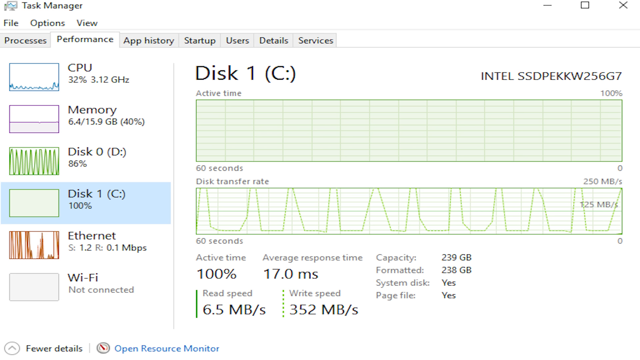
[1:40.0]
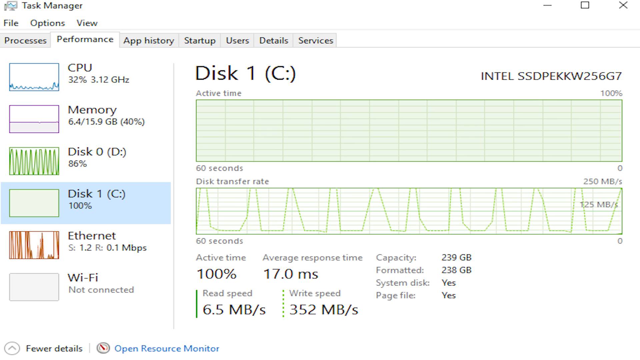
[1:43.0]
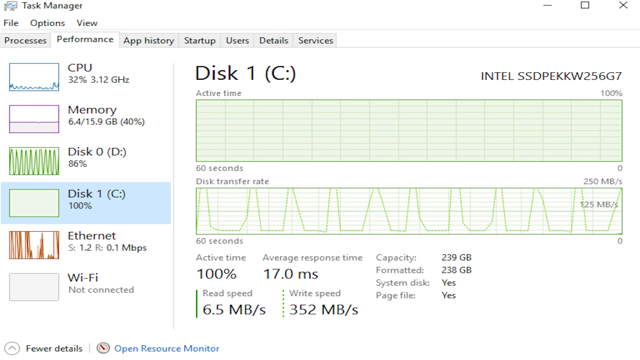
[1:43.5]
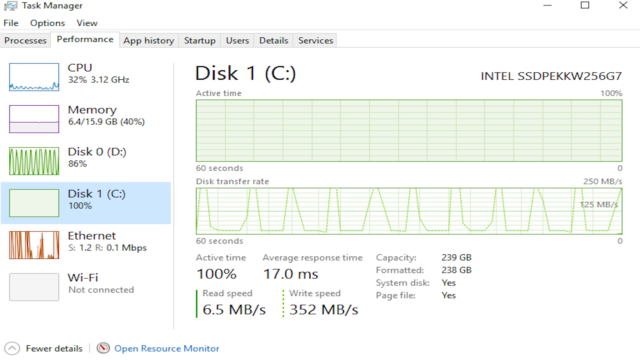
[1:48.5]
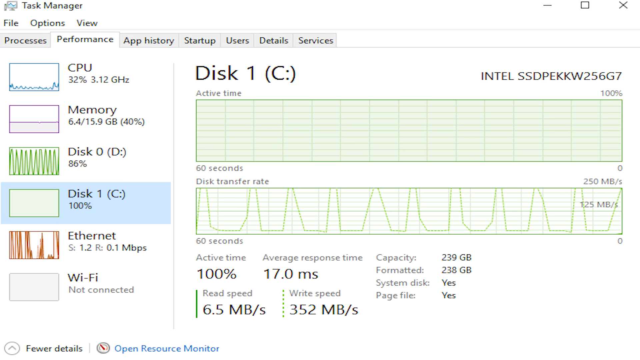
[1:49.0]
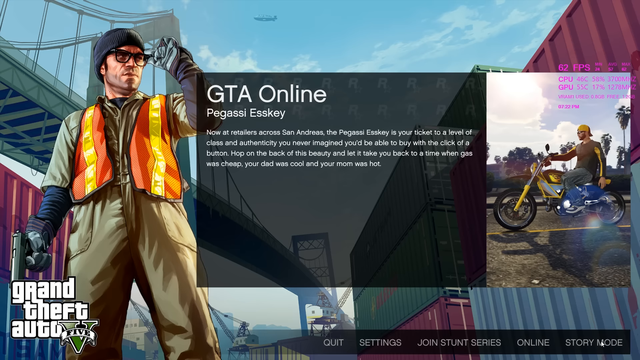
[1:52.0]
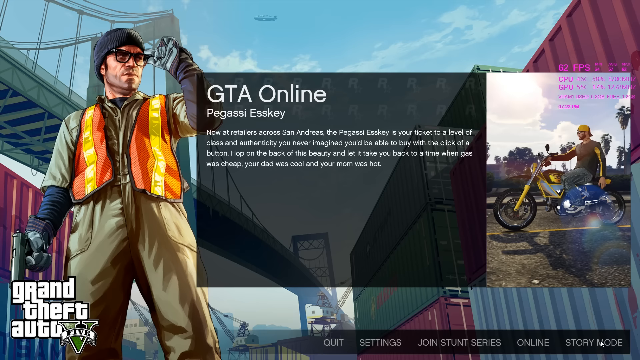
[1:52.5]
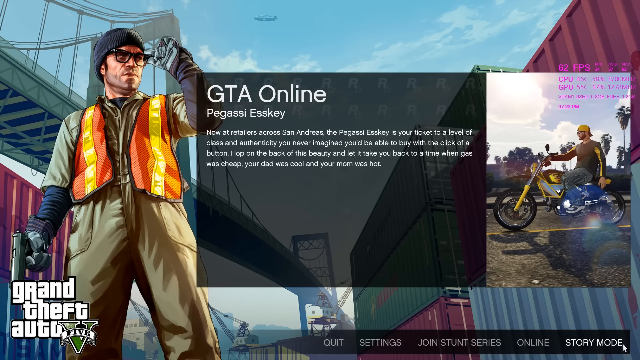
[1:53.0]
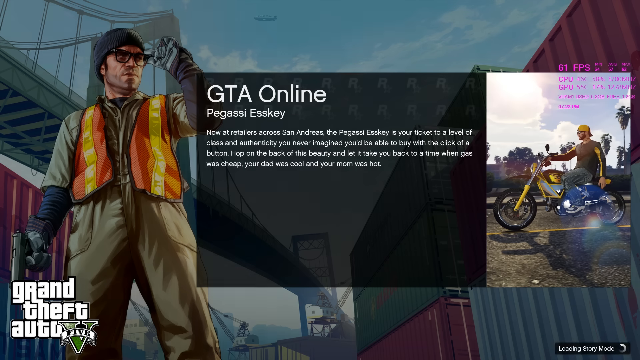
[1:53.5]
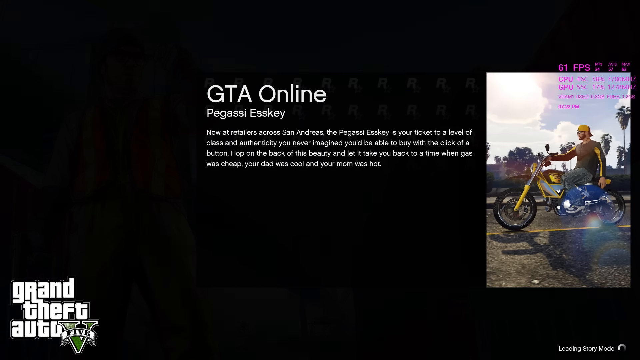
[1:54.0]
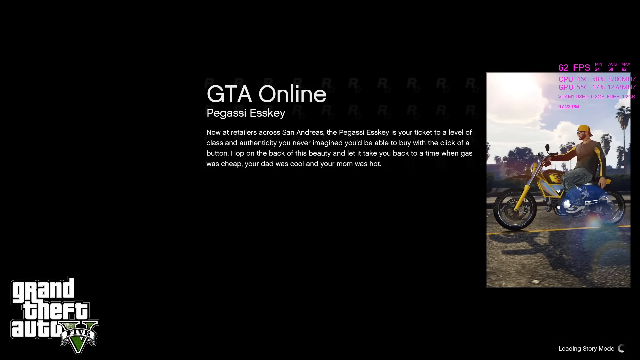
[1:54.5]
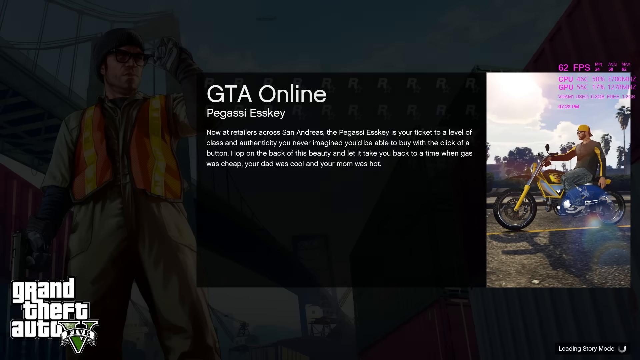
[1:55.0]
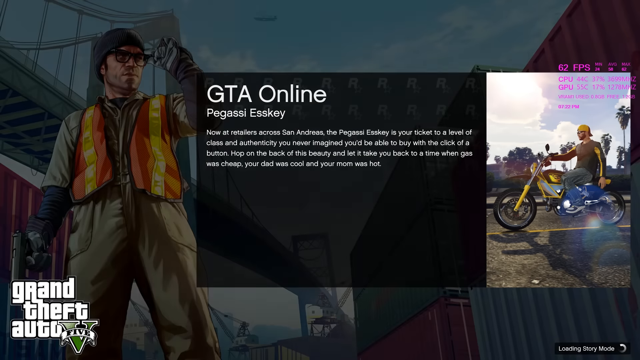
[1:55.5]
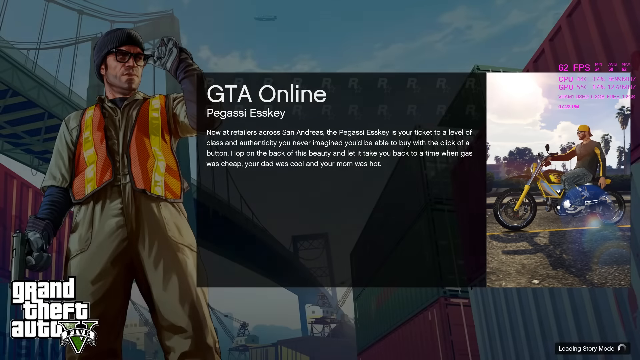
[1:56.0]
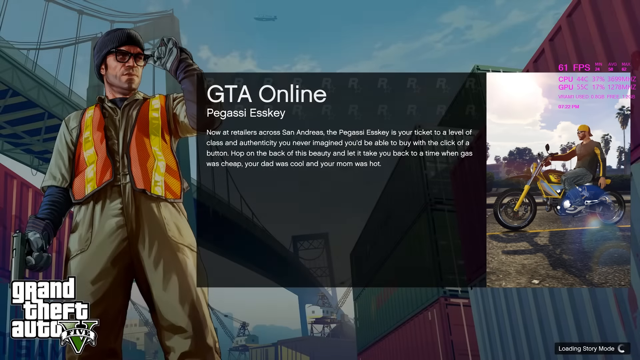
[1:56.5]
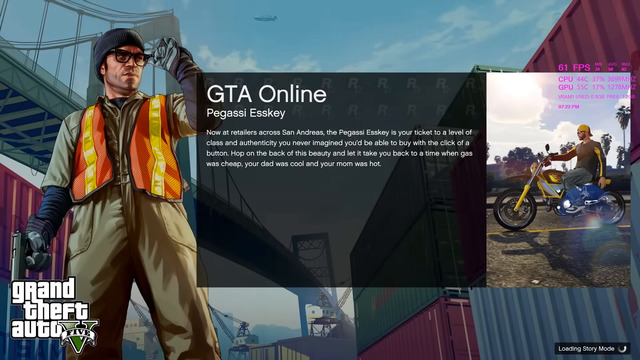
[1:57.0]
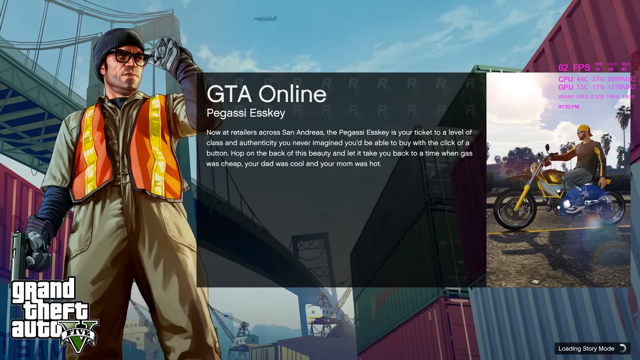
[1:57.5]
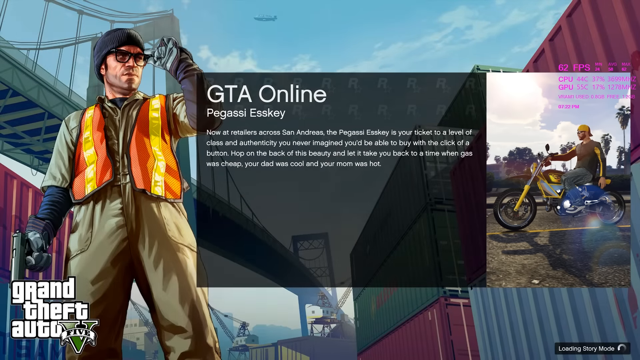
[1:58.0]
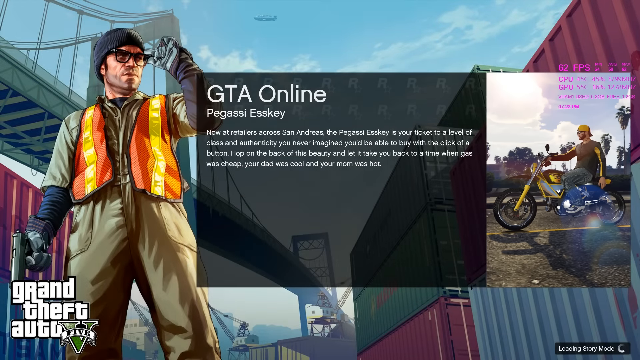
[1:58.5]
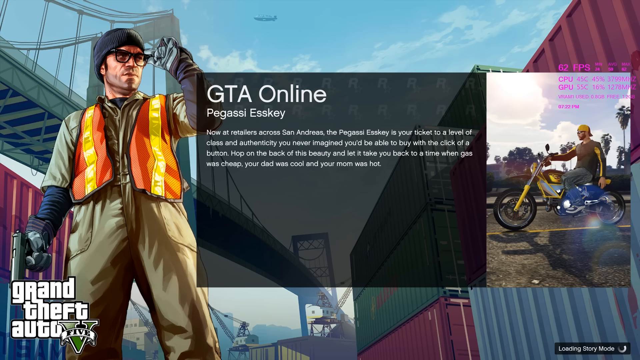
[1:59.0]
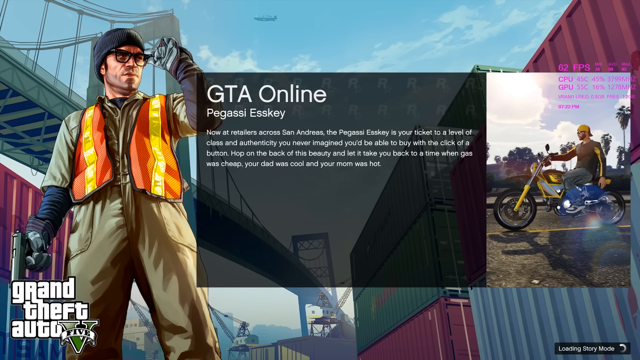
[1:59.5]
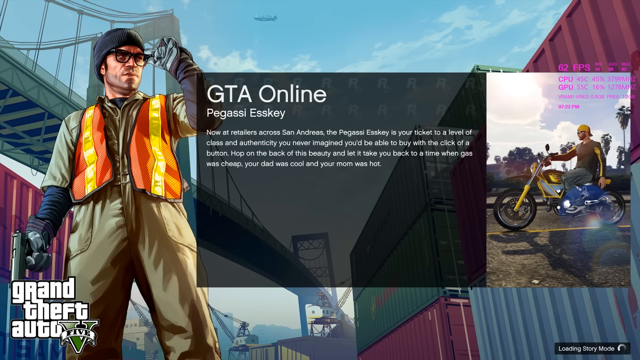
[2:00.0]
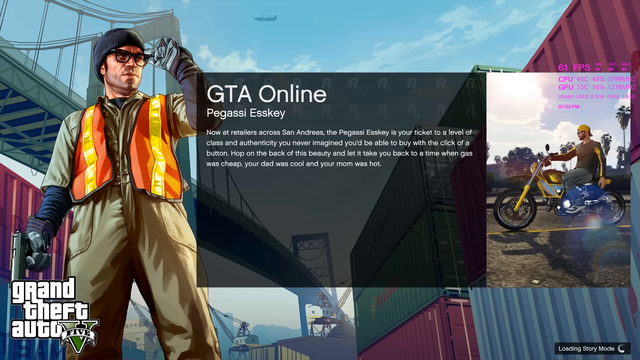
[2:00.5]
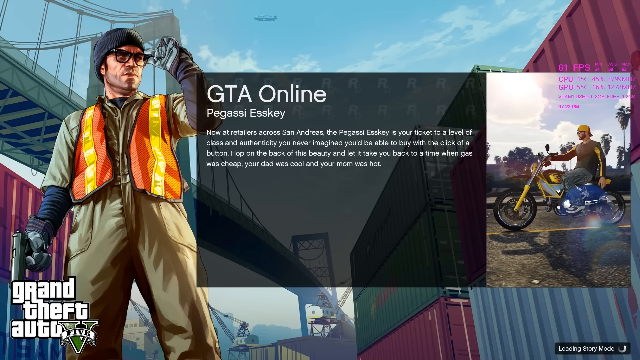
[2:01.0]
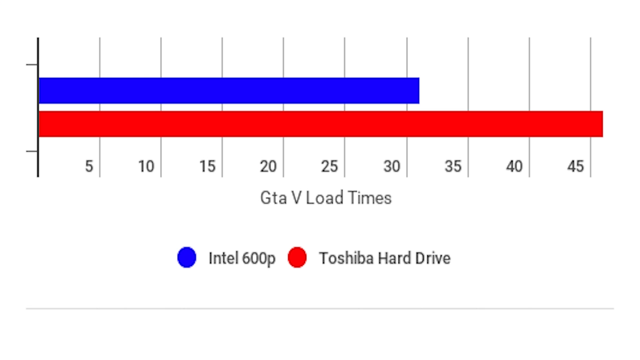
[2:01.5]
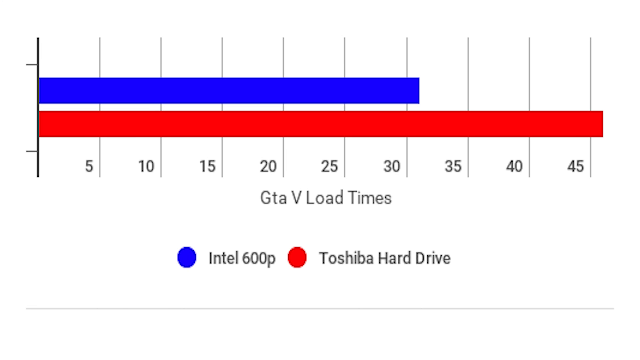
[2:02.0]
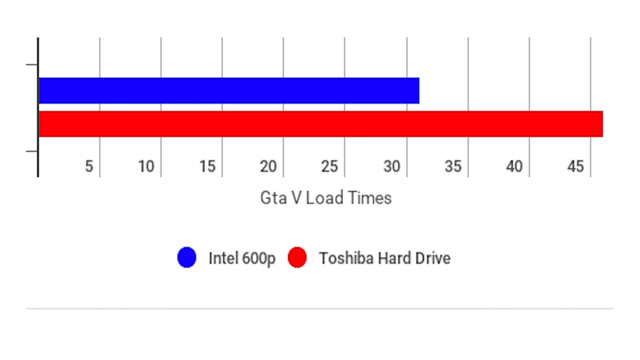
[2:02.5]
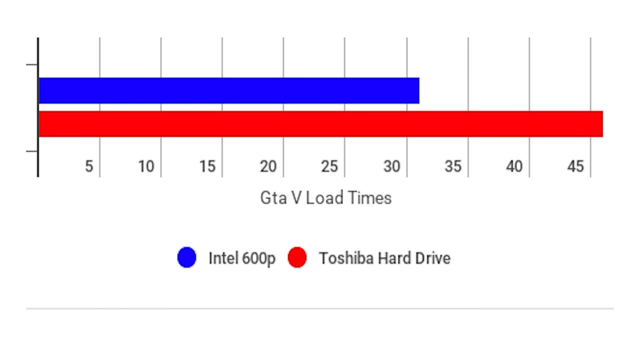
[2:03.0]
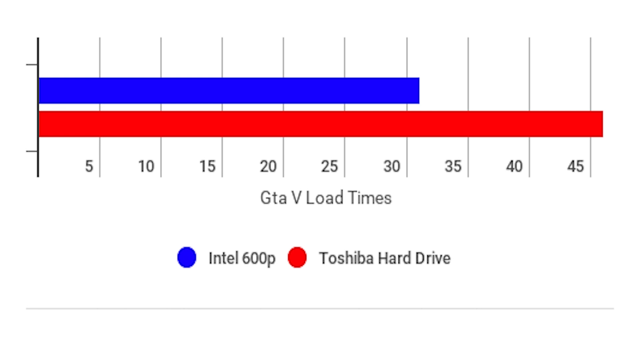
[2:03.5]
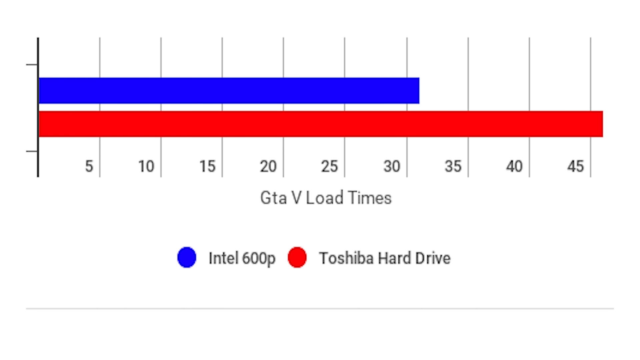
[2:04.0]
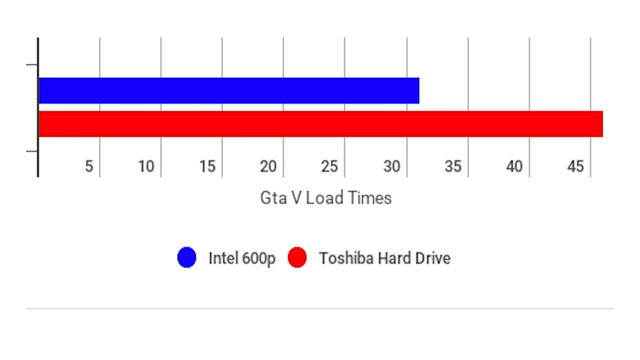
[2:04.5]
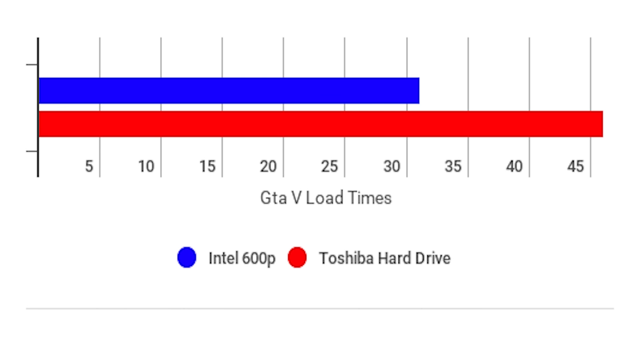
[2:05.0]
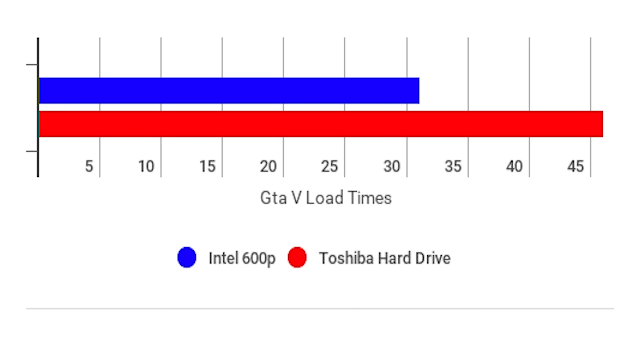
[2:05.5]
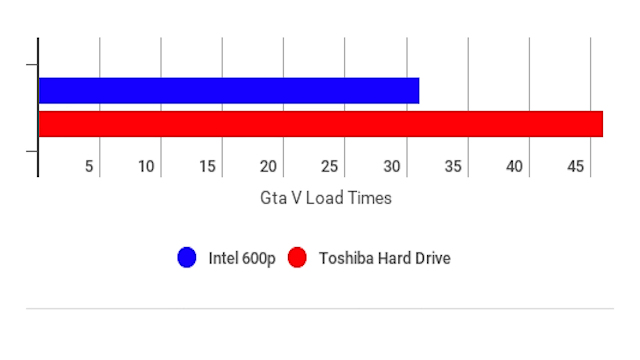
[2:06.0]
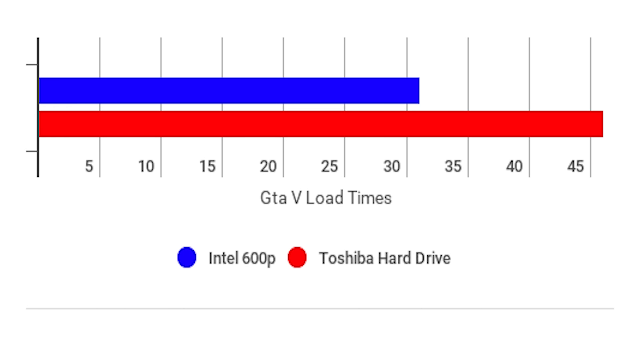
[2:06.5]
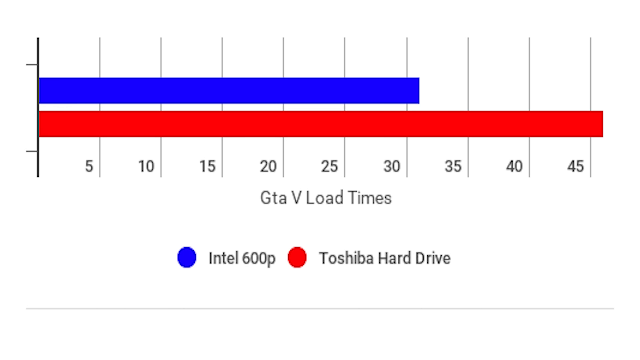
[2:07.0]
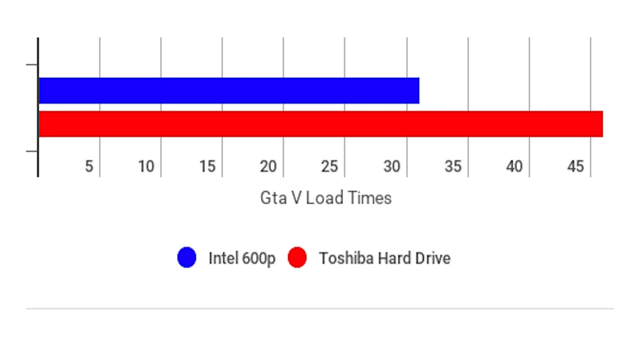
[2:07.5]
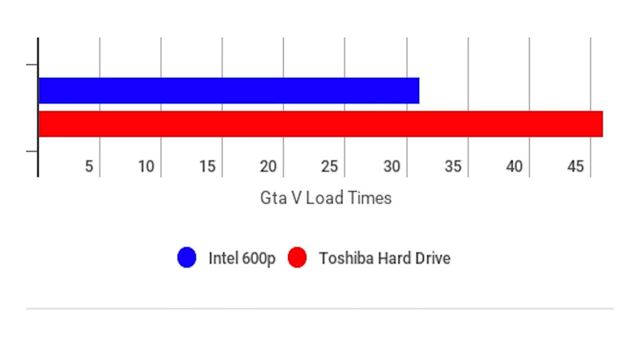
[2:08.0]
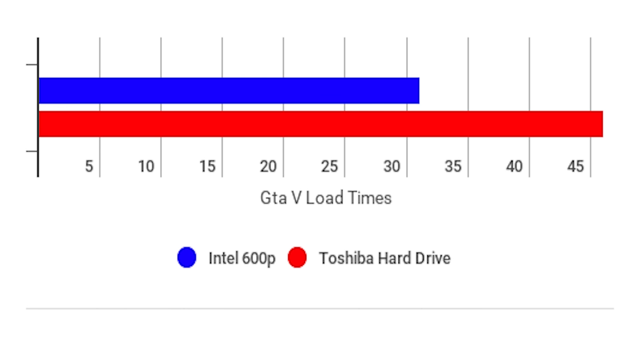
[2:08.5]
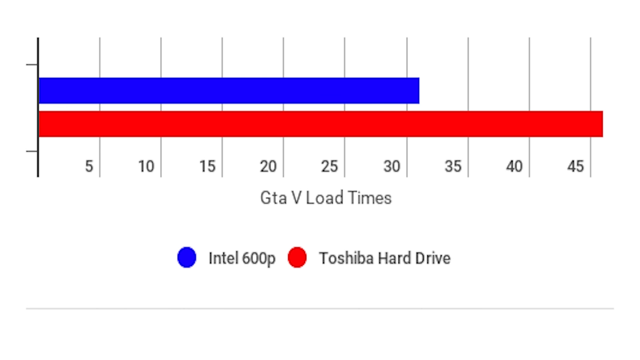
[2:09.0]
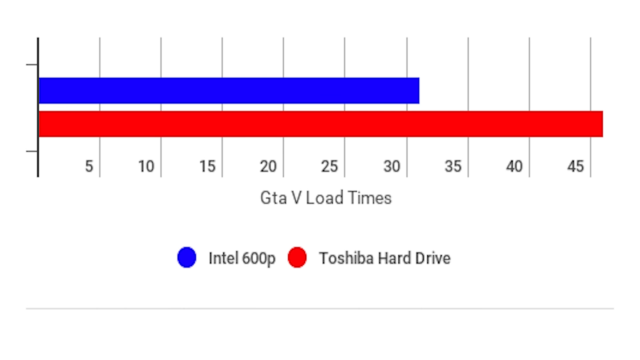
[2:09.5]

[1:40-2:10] The task manager window fills the entire screen with the performance tab open, and the top of the screen reads "disk one." There is a graph for active time, which looks like a bar graph, and a graph for disk transfer rate, which looks like a line graph with lots of lines going up and down. On the left side of the screen is a list of options: CPU, memory, disk 0, disk 1, Ethernet and Wi-Fi. The screen then changes to a shot from a Grand Theft Auto game, possibly a loading screen rather than gameplay. It shows an illustration of a man wearing an orange and yellow safety vest, black glasses and a beanie, holding a gun in his left hand and adjusting the beanie with his right. Another image shows possibly the same character sitting on a bike, wearing a backward yellow cap and a gray and yellow long-sleeve shirt. In the middle of the screen, white text reading "GTA Online" is on a gray rectangle. The screen changes again to a bar graph with only two bars, one blue and one red, with "GTA 5 load times" at the bottom, a blue dot for "Intel 600P" and a red dot for "Toshiba hard drive."